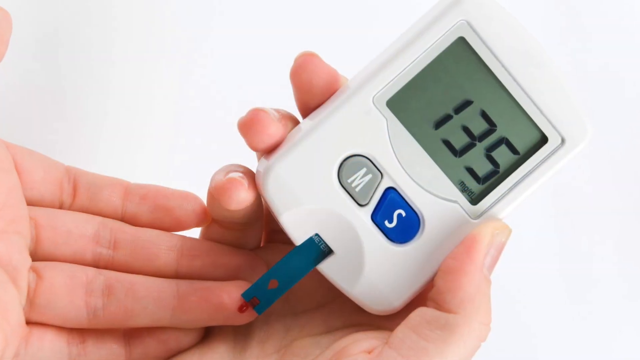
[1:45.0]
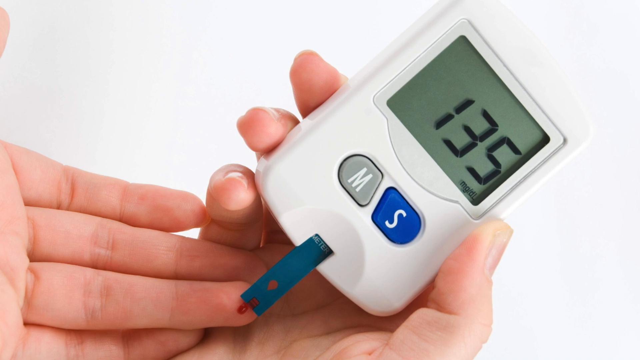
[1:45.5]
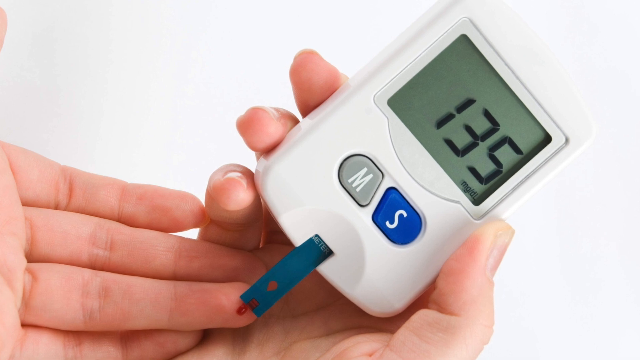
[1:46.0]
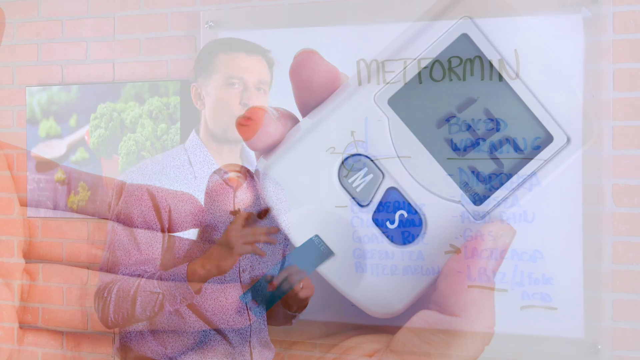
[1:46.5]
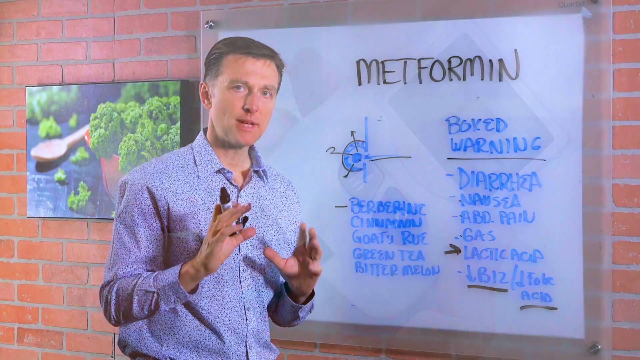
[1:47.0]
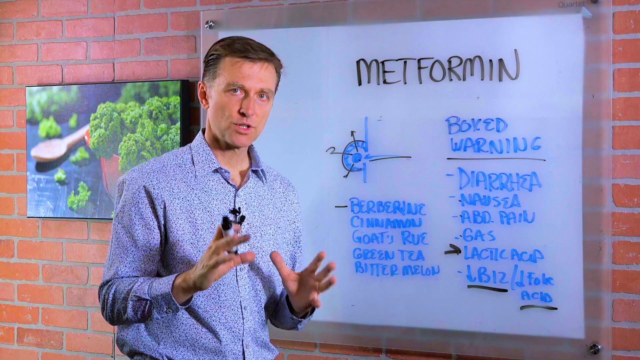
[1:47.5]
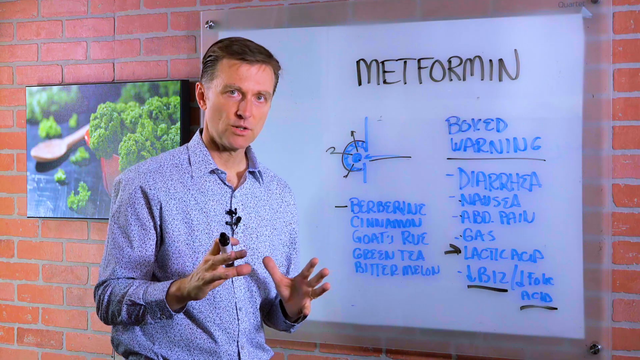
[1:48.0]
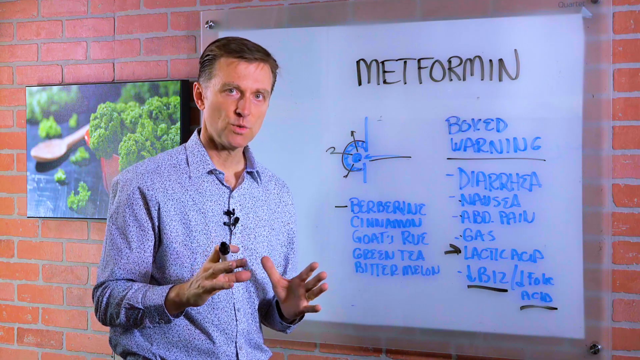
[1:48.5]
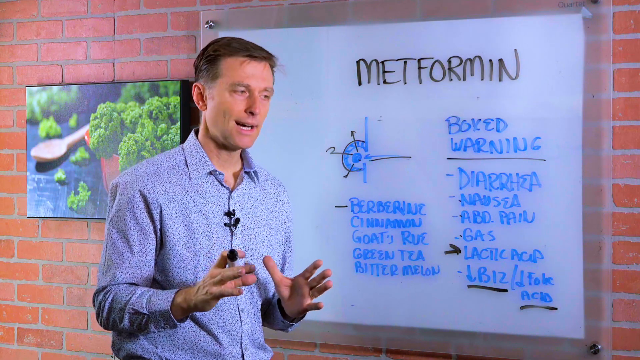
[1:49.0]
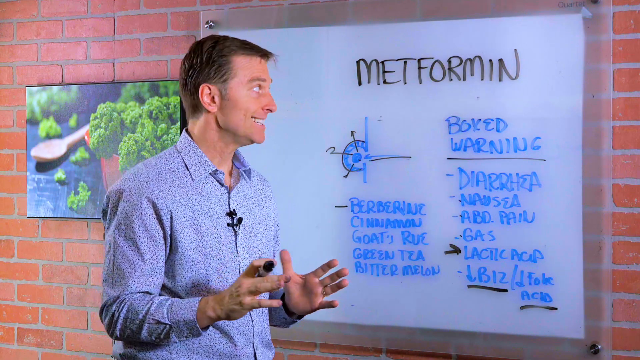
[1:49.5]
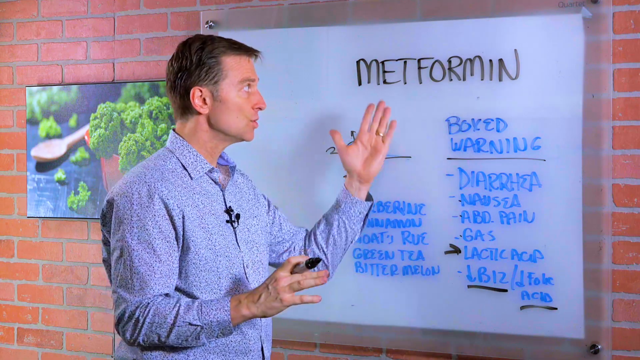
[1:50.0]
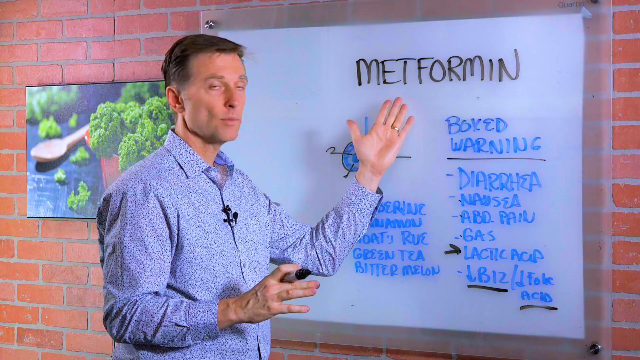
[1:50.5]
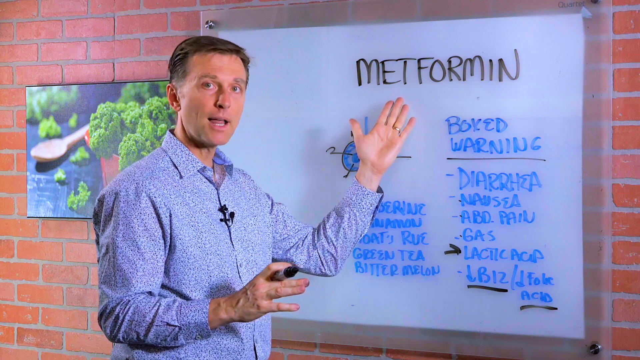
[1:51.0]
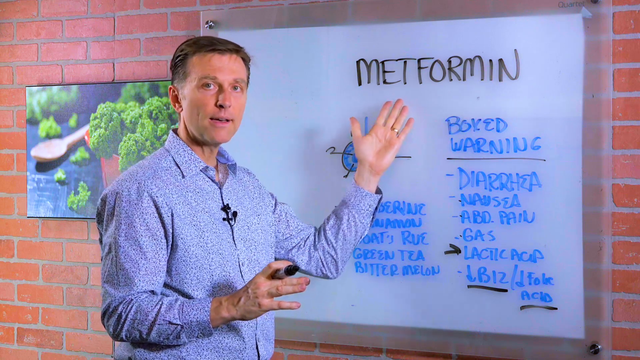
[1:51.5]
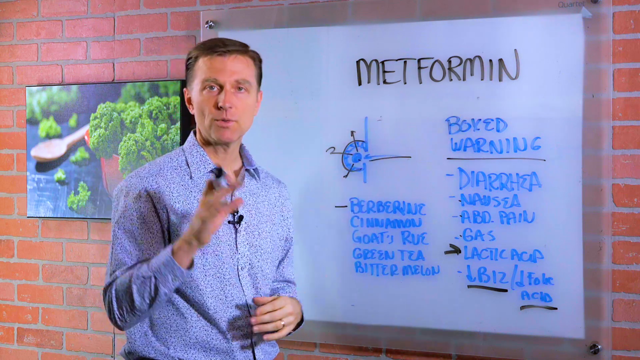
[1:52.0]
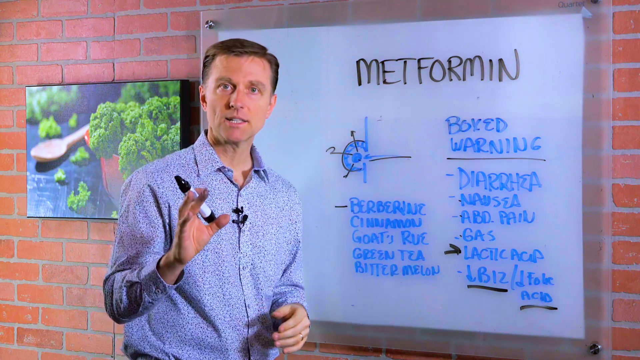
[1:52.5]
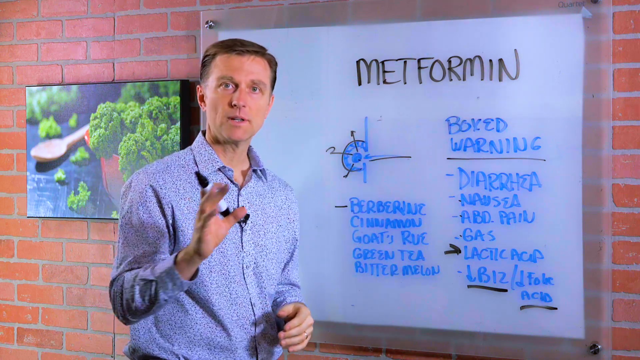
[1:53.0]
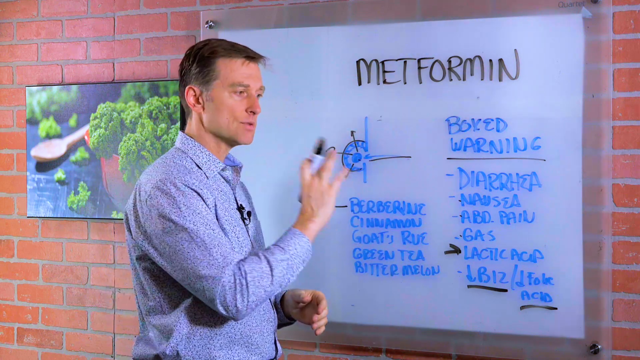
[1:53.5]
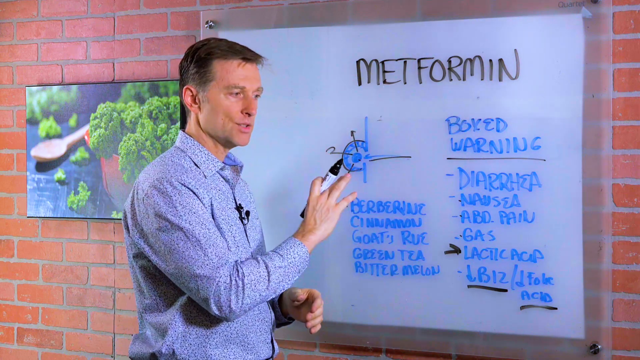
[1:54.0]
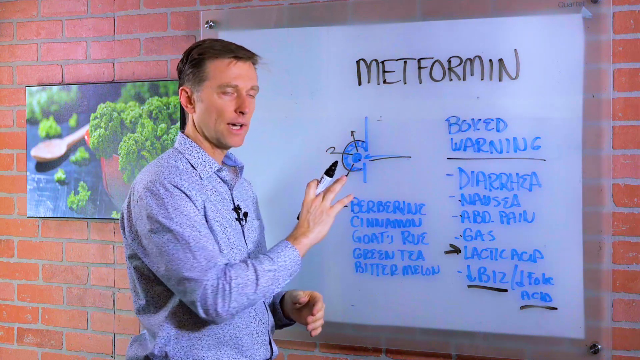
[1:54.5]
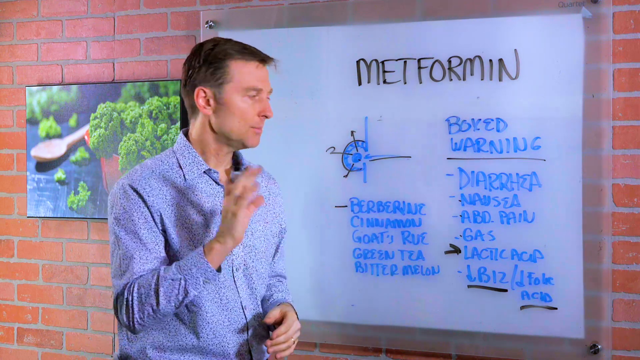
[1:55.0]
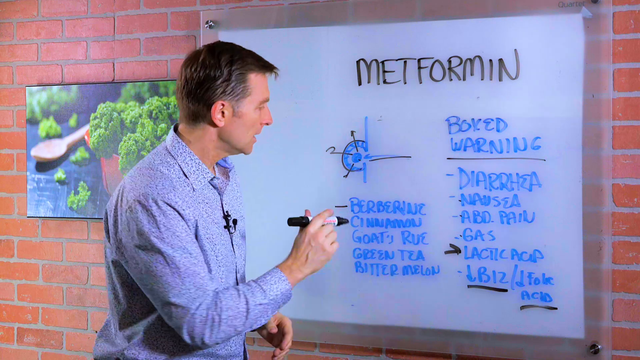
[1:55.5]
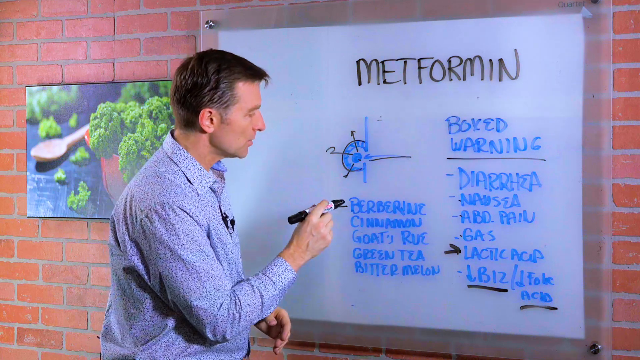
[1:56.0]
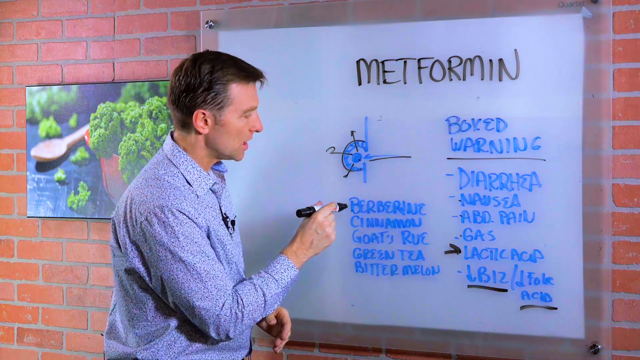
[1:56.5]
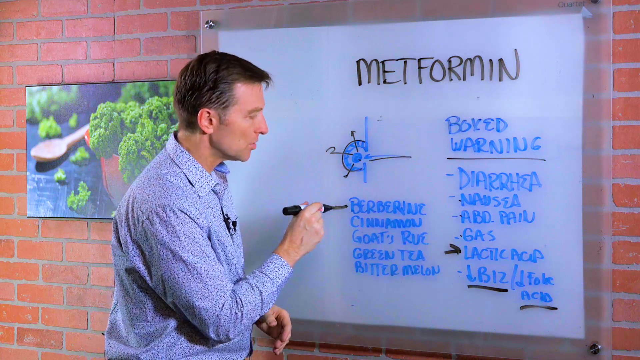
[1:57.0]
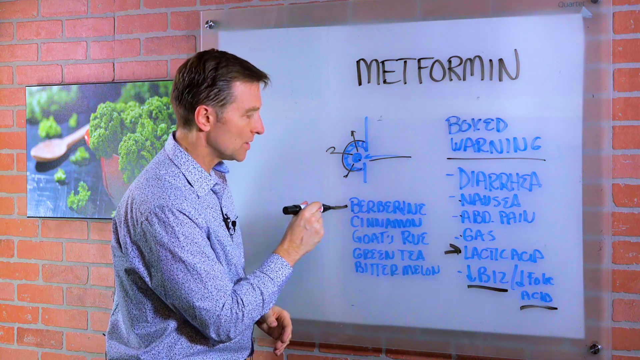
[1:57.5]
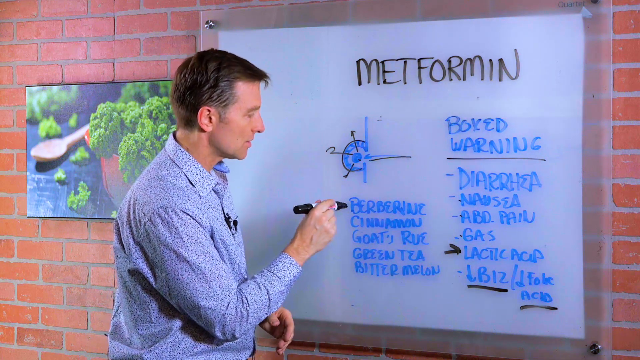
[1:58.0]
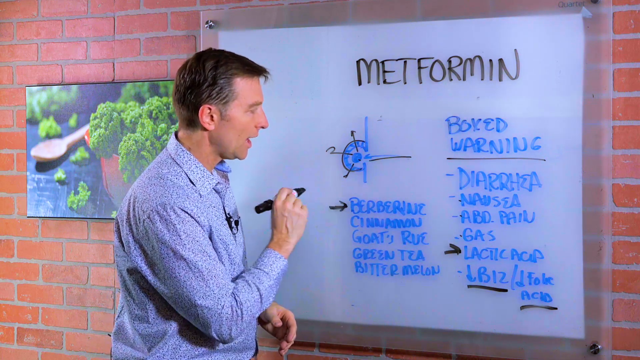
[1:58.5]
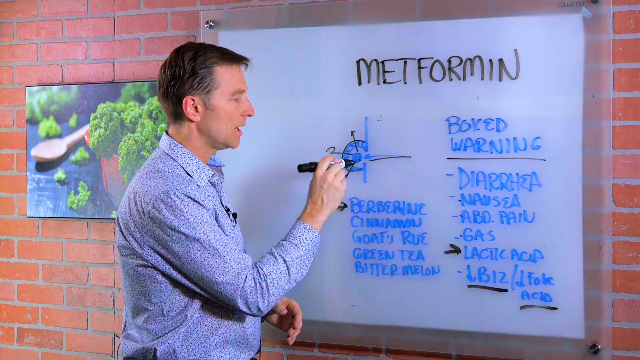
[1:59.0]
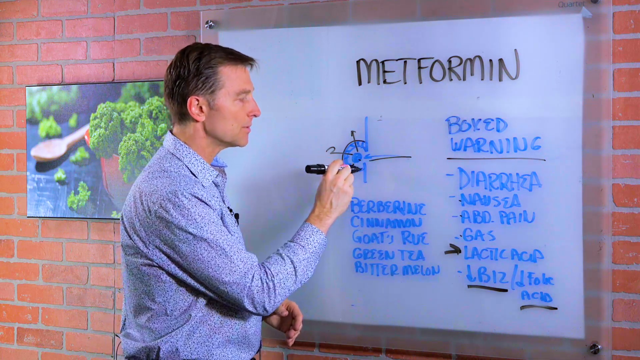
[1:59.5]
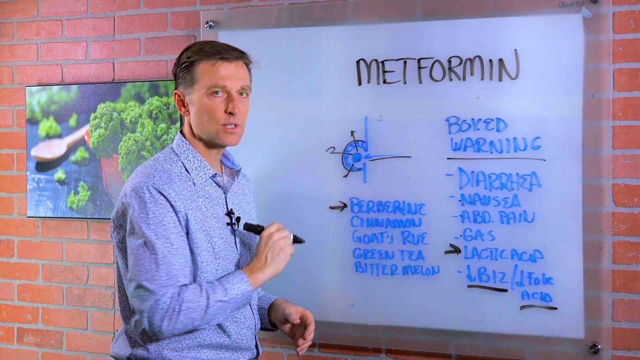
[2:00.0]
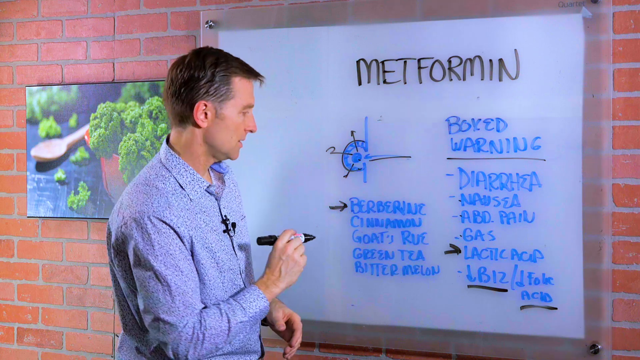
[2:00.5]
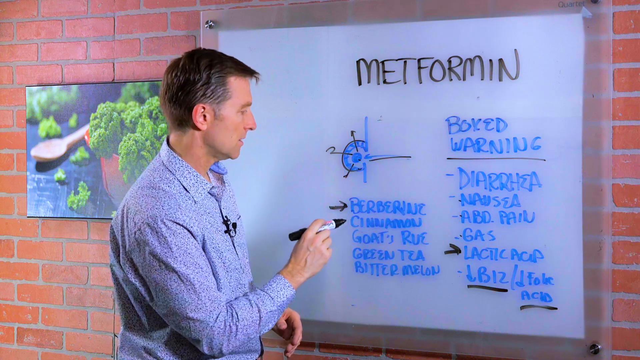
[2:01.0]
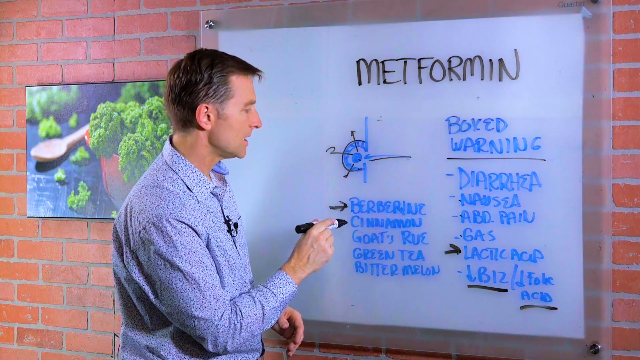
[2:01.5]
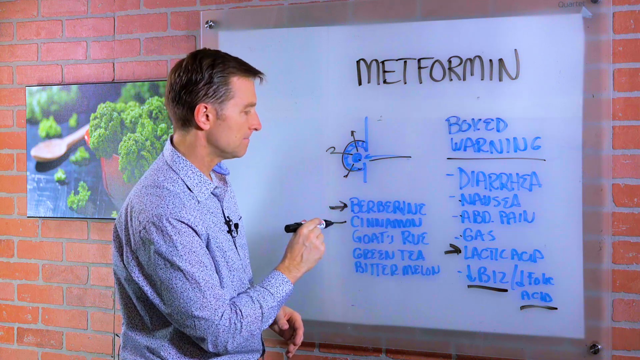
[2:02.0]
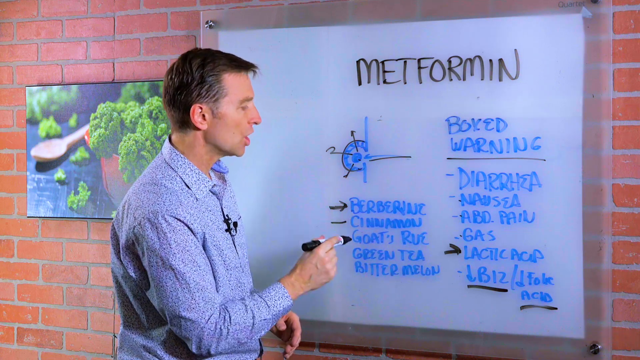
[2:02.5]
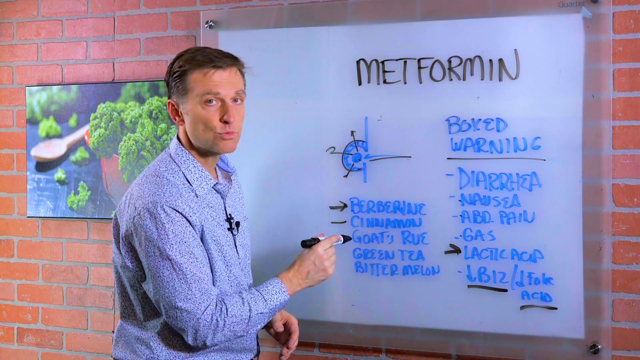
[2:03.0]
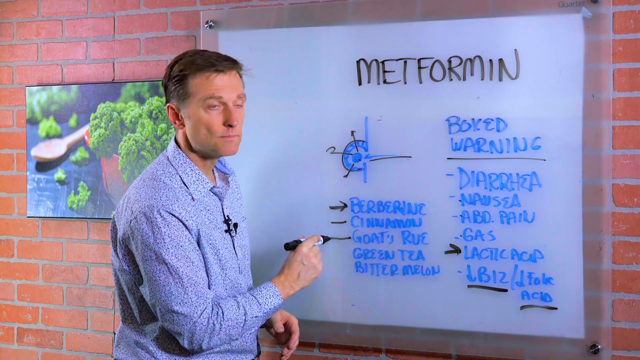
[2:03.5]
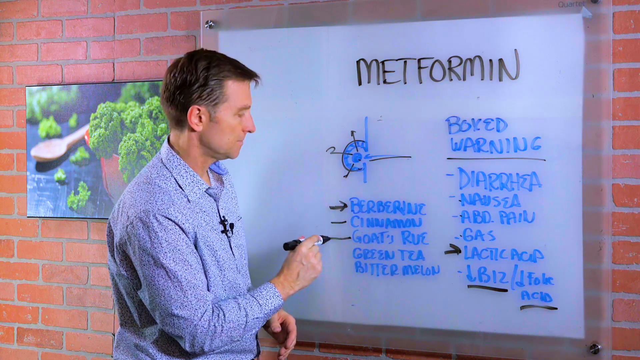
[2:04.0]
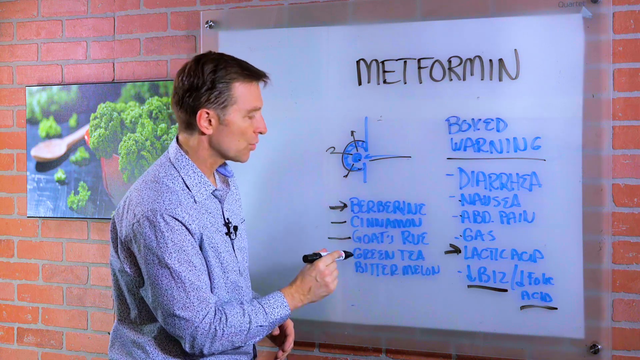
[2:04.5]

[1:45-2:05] A stock photo shows a blood sugar measuring device with an LCD. The two hands have short manicured nails, and one finger is being pricked by a testing strip and giving a sample of blood. The video cuts back to the man at the whiteboard, who points at the word "metformin" in black text. He then returns to the left-hand side and the diagram he drew, underlining each individual ingredient, drawing lines next to "berberine," "cinnamon," "goat's rue," "green tea," and "bitter melon" one by one while facing the board. The camera zooms out a bit, showing all the notations he has made on the board. He speaks to the camera using his hands and points at the diagram on the middle left side, pointing at certain portions for emphasis with the black marker in his right hand. He then steps and turns a little so he is facing the camera and opens his hands as though still explaining.